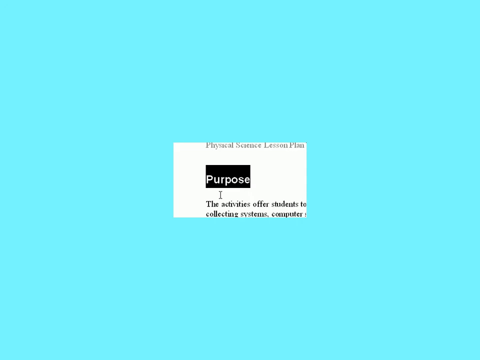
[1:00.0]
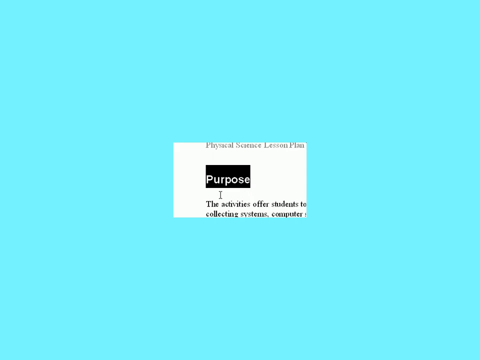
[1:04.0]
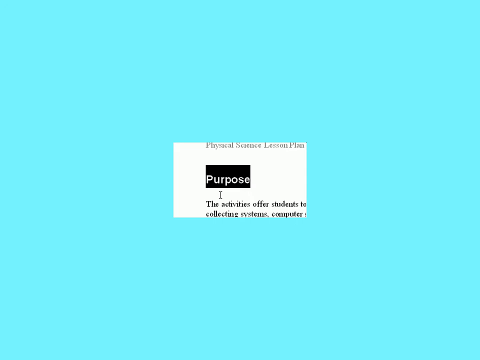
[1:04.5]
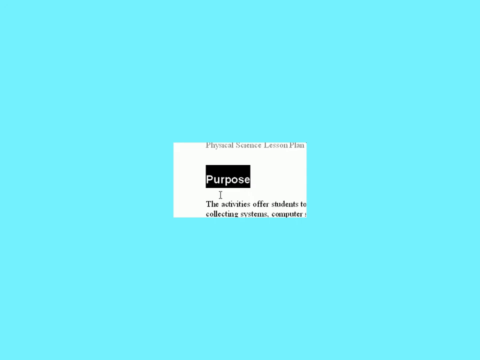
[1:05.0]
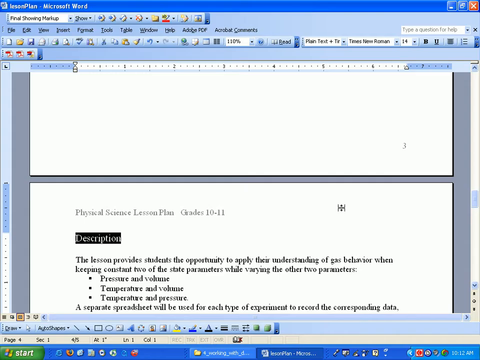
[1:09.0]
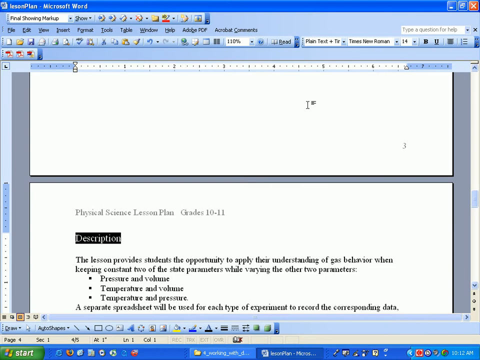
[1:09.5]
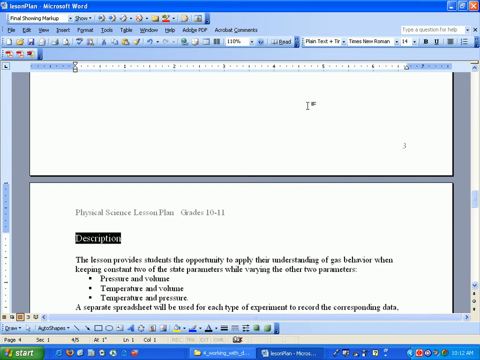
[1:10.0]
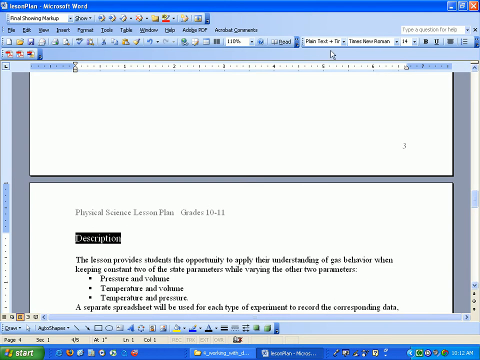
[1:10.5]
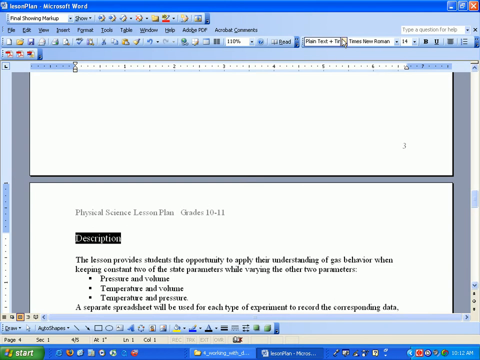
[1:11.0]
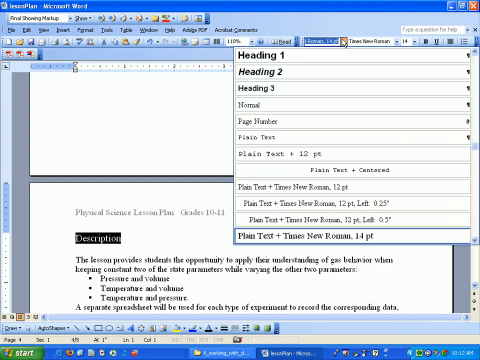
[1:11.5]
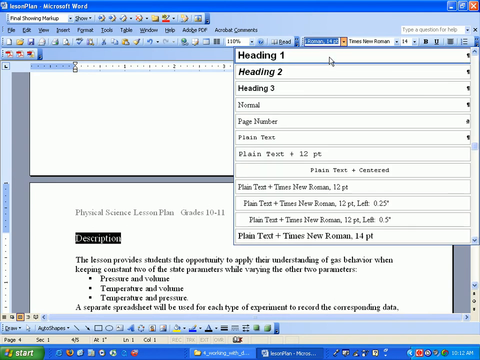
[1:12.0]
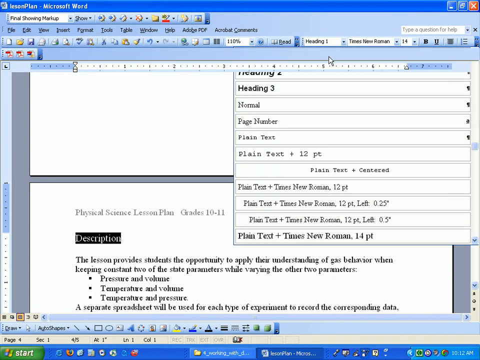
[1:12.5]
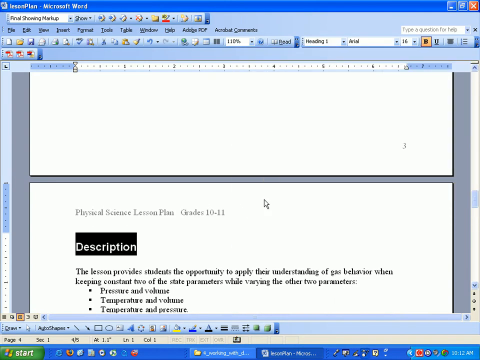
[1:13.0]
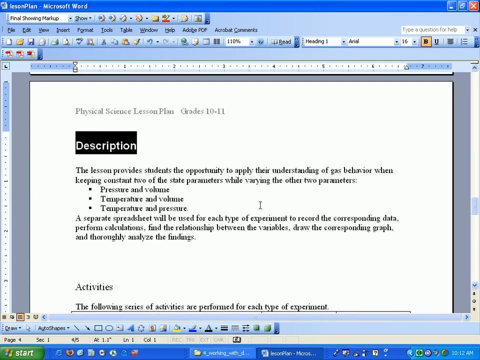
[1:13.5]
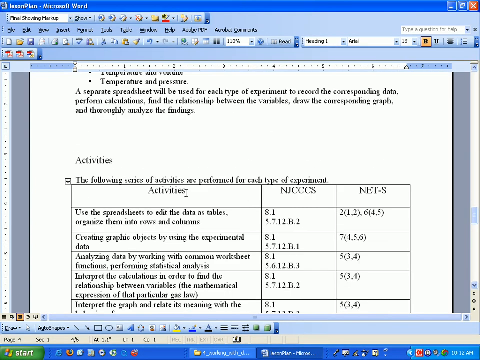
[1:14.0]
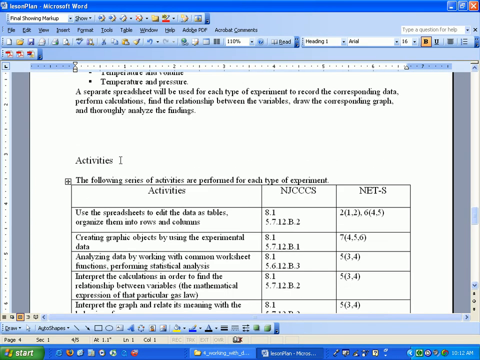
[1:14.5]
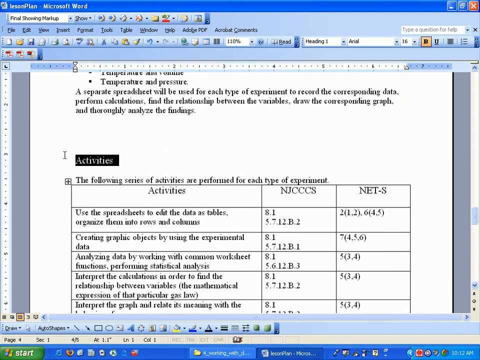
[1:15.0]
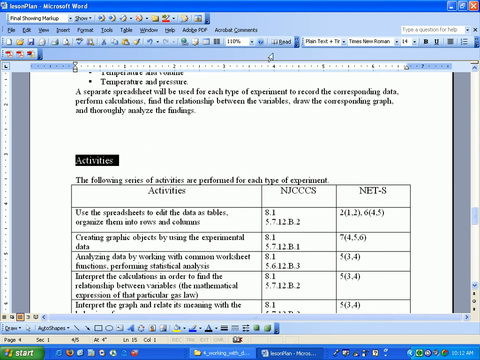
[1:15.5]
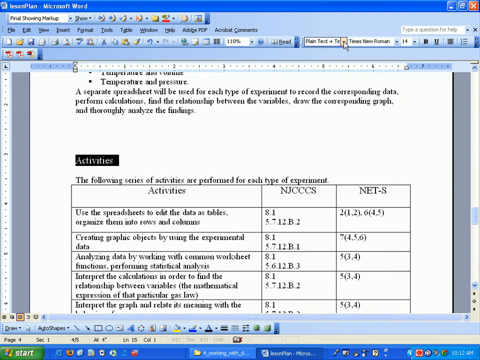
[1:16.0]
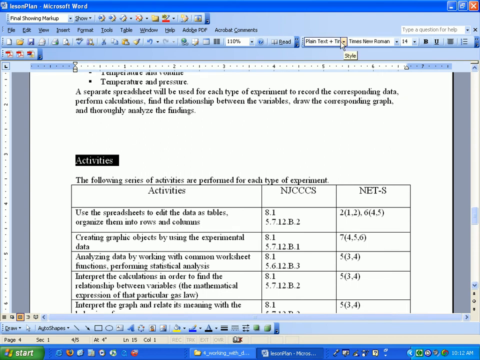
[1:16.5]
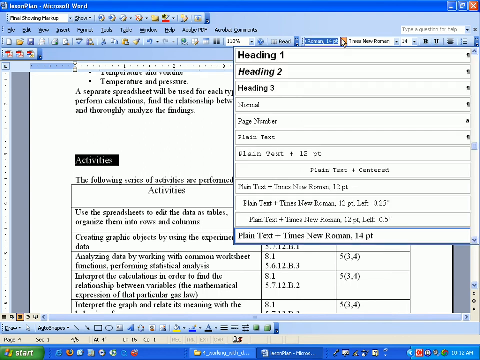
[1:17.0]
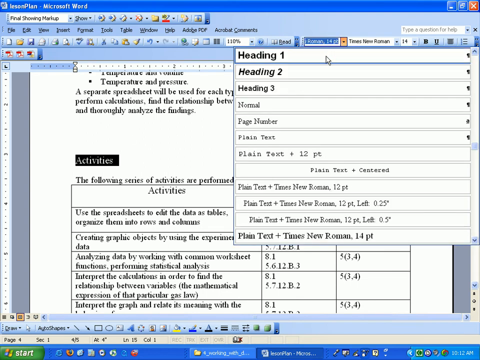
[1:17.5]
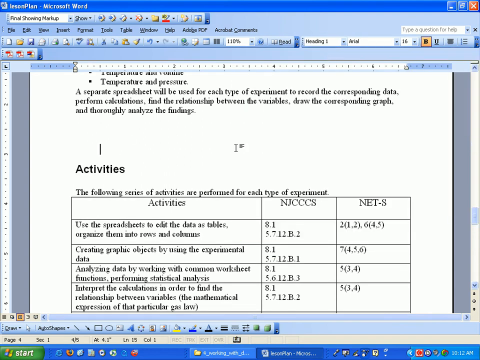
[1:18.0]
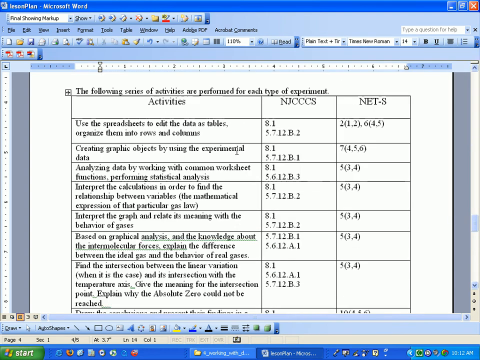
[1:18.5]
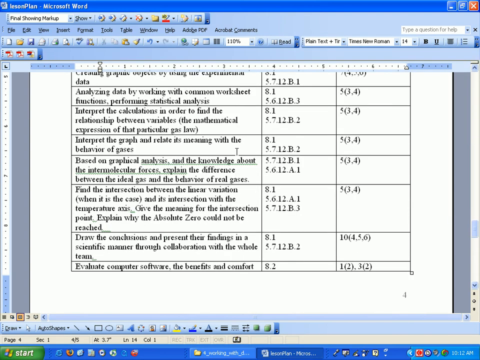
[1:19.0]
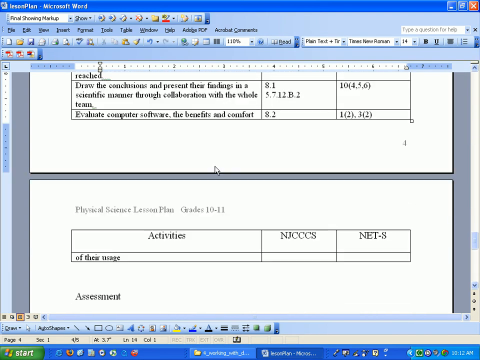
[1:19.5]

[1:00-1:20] Someone is making edits to their writing, which is small. They are fixing their headlines, making them bolder so that they stand out as headlines, possibly doing some touch-ups.